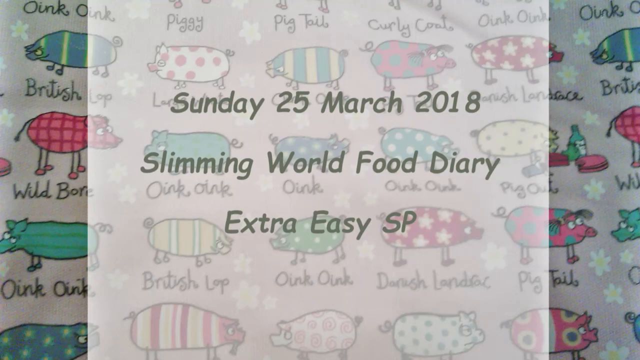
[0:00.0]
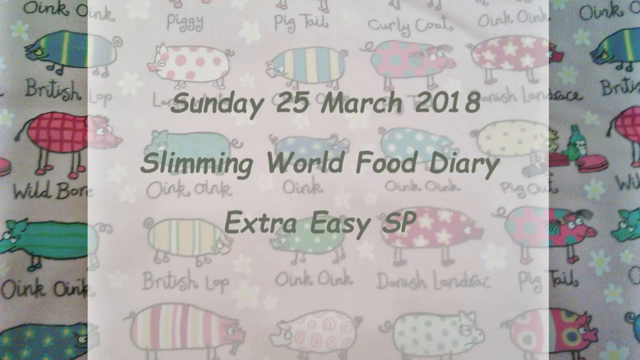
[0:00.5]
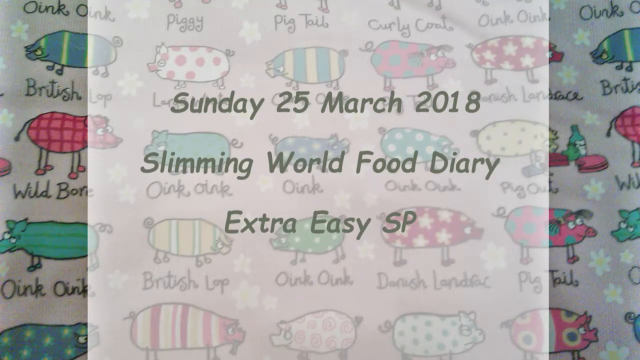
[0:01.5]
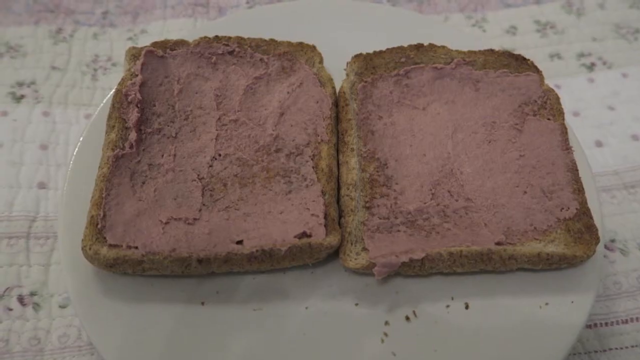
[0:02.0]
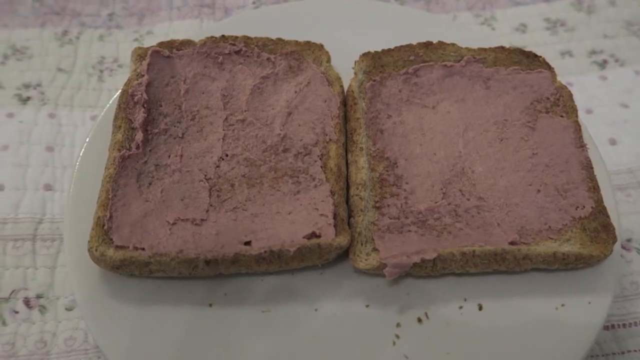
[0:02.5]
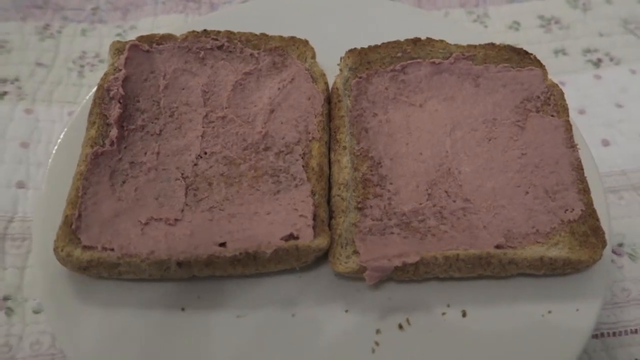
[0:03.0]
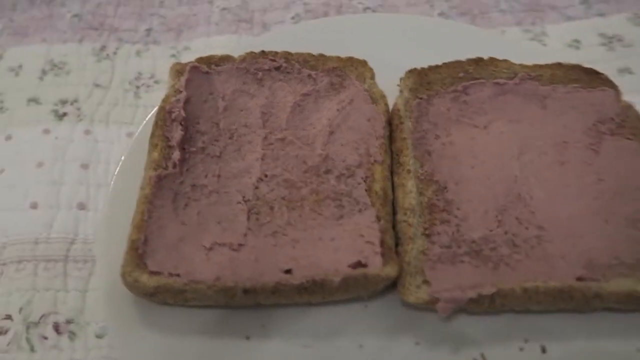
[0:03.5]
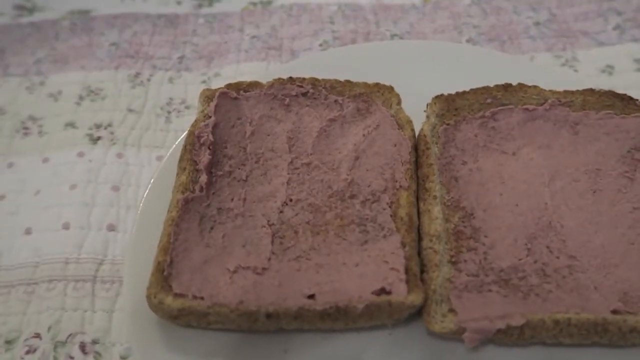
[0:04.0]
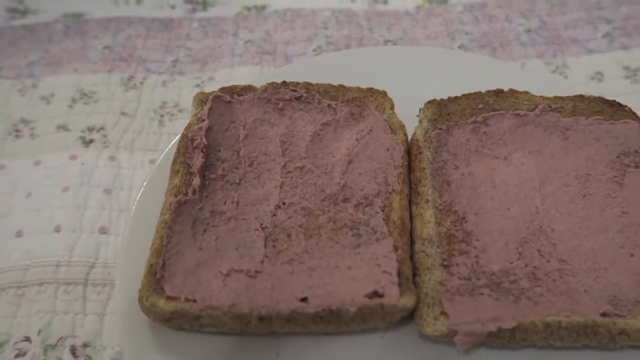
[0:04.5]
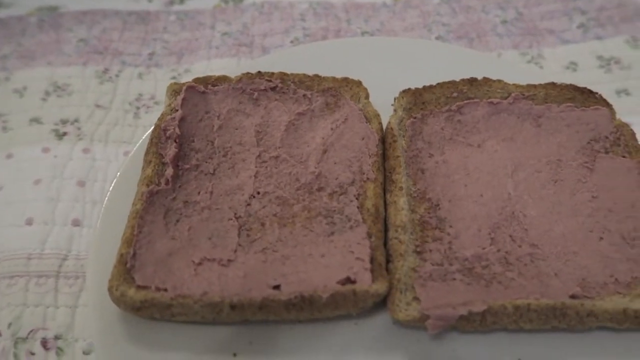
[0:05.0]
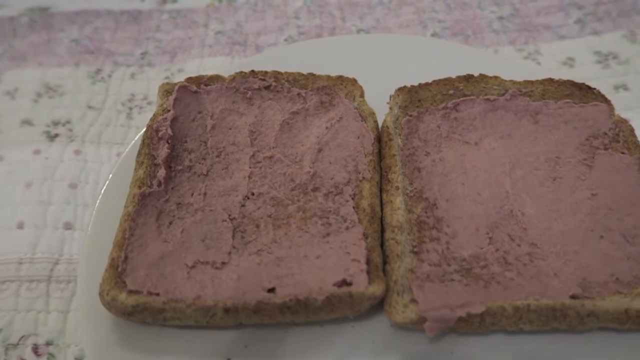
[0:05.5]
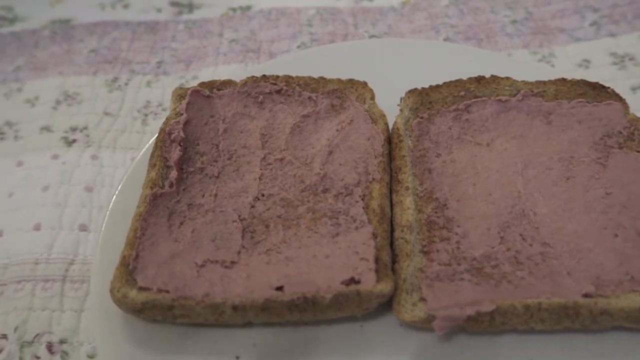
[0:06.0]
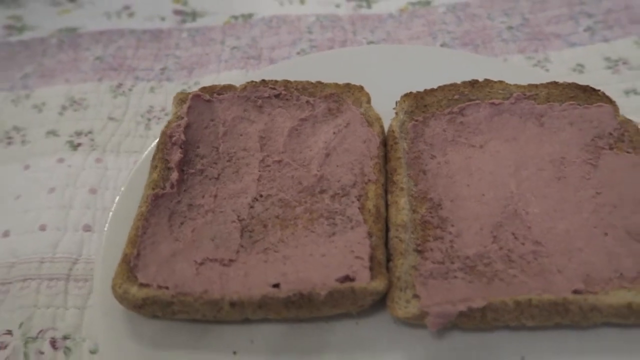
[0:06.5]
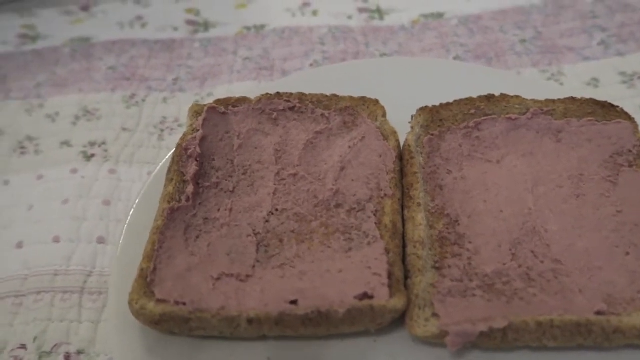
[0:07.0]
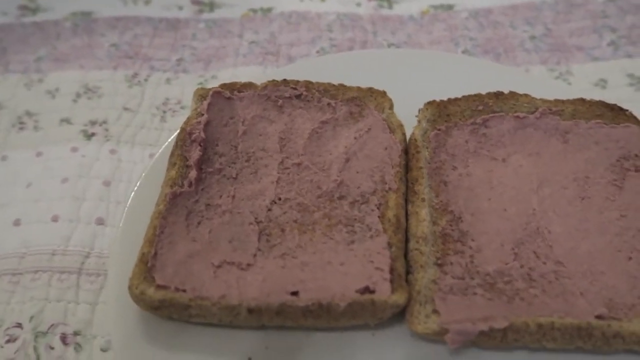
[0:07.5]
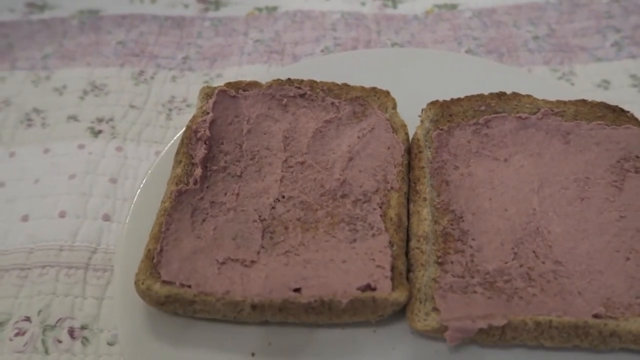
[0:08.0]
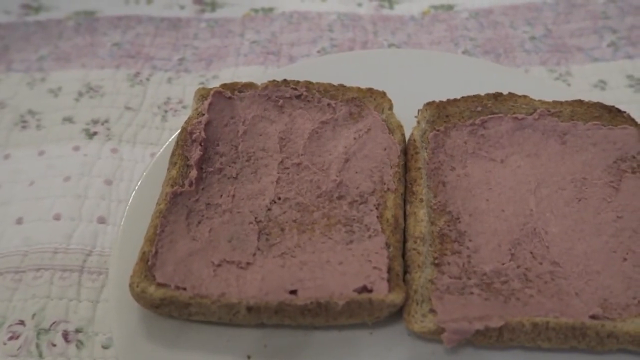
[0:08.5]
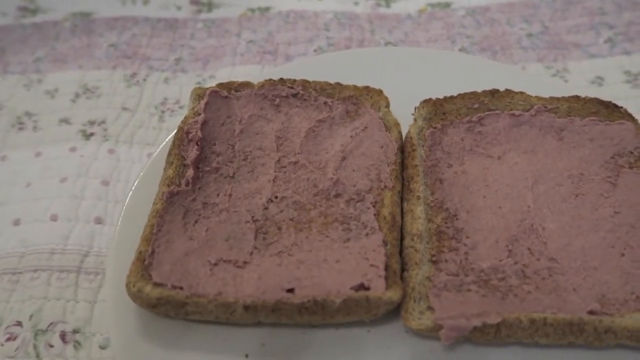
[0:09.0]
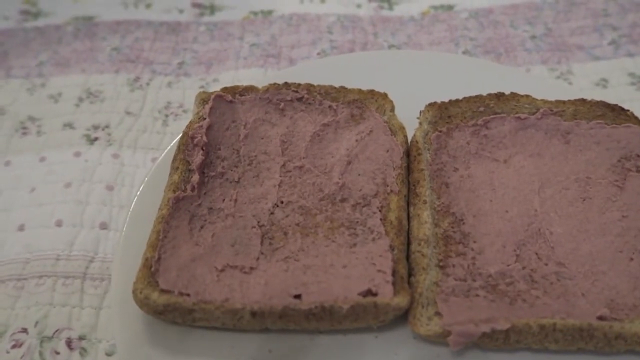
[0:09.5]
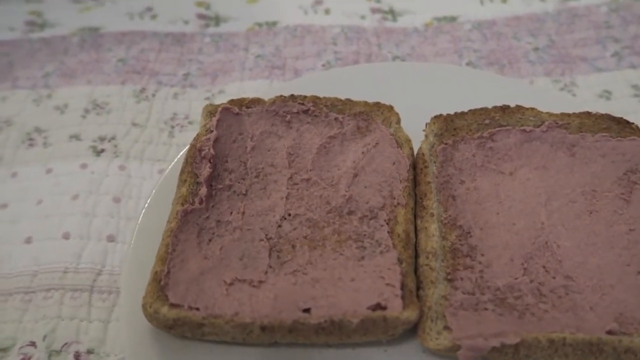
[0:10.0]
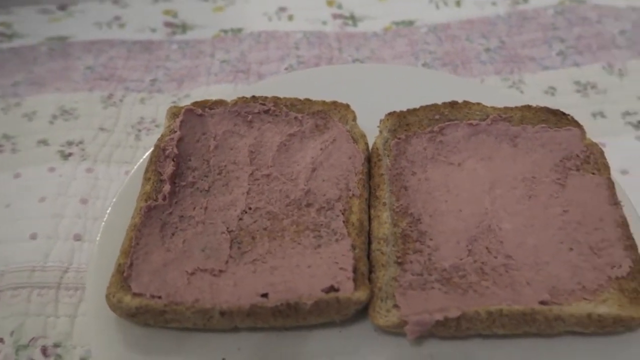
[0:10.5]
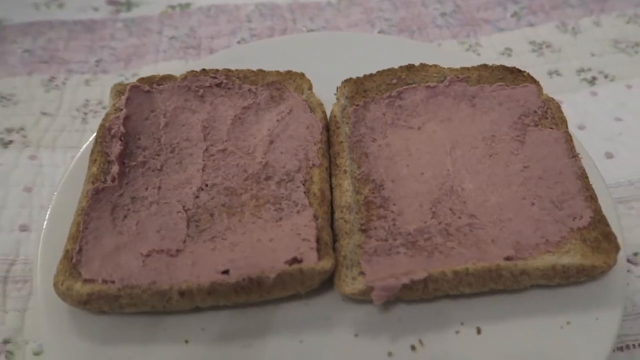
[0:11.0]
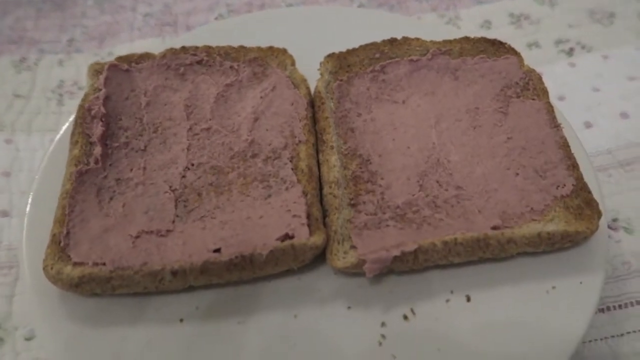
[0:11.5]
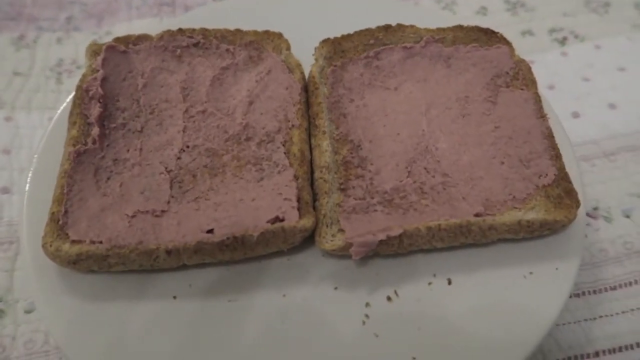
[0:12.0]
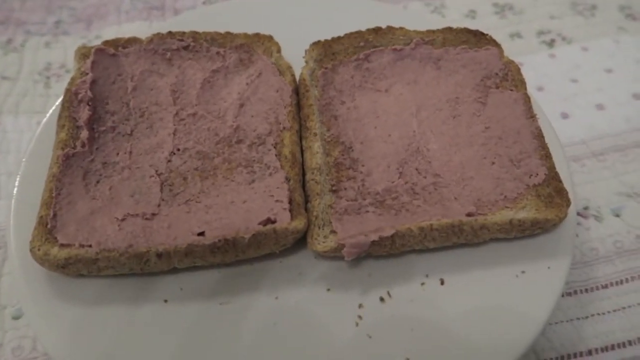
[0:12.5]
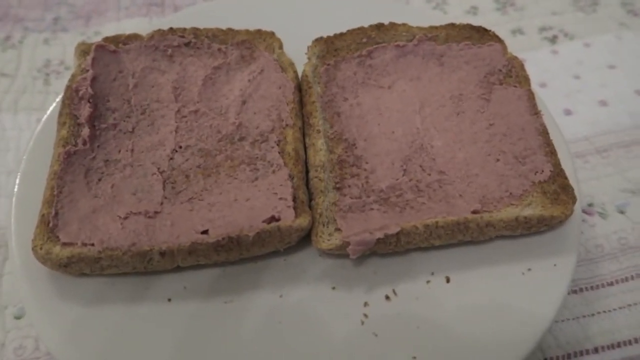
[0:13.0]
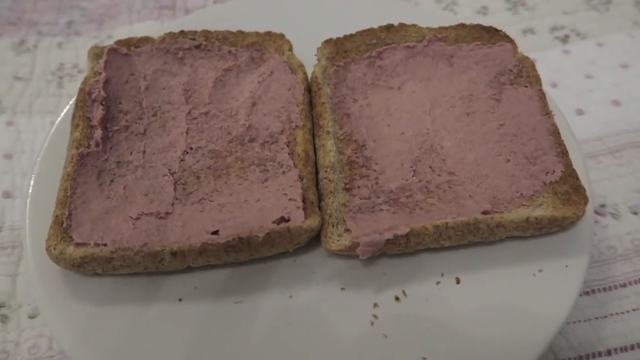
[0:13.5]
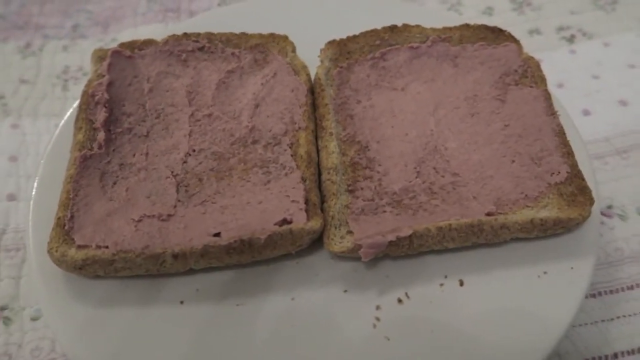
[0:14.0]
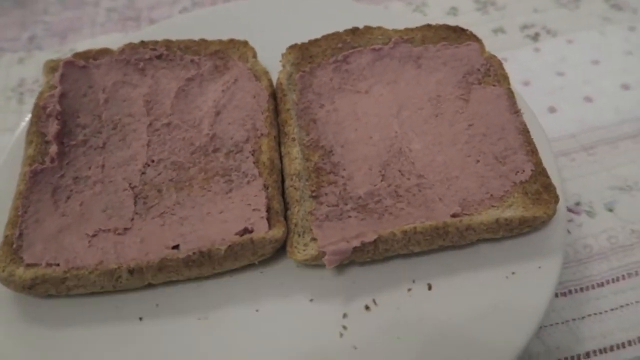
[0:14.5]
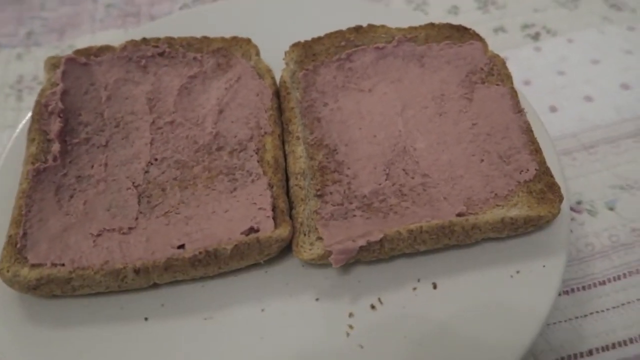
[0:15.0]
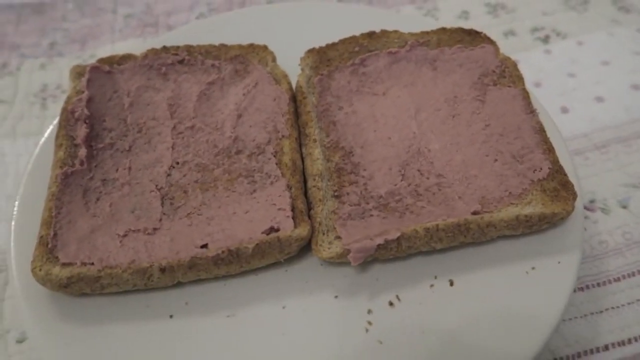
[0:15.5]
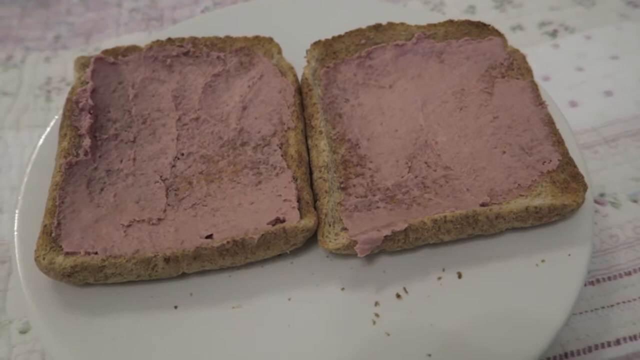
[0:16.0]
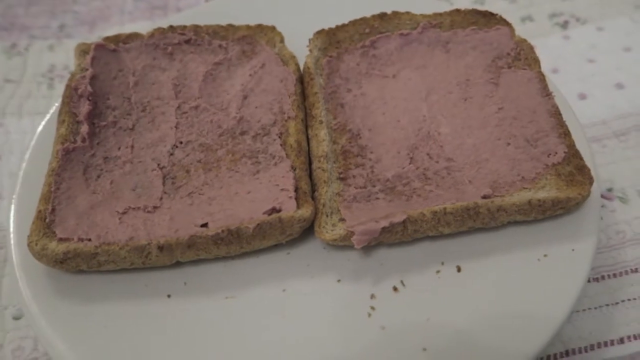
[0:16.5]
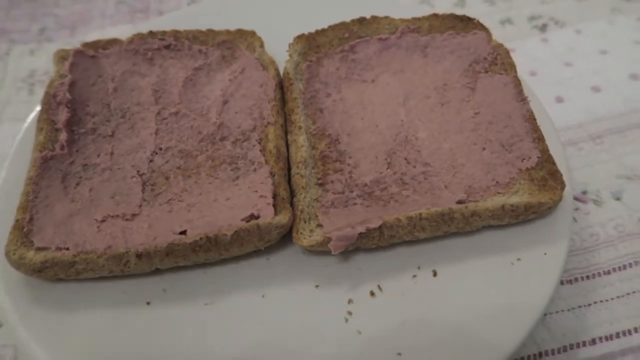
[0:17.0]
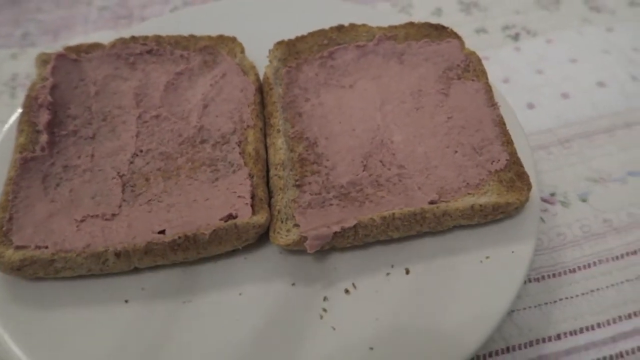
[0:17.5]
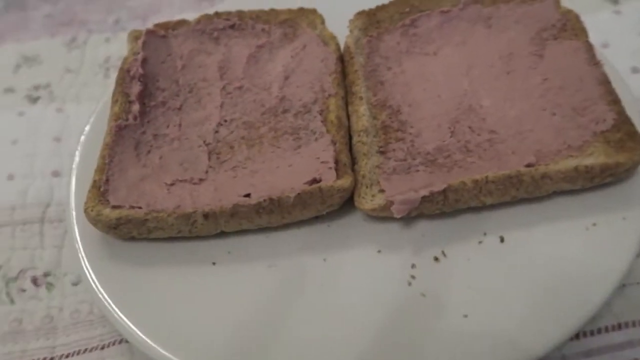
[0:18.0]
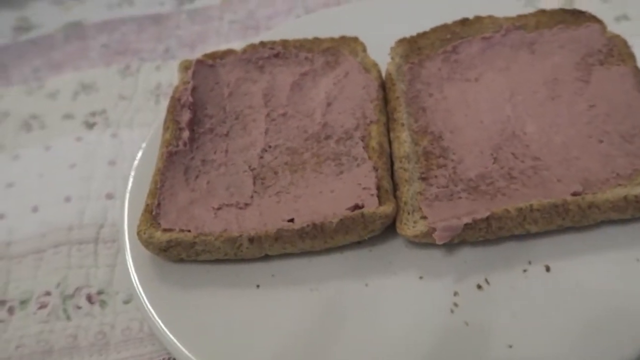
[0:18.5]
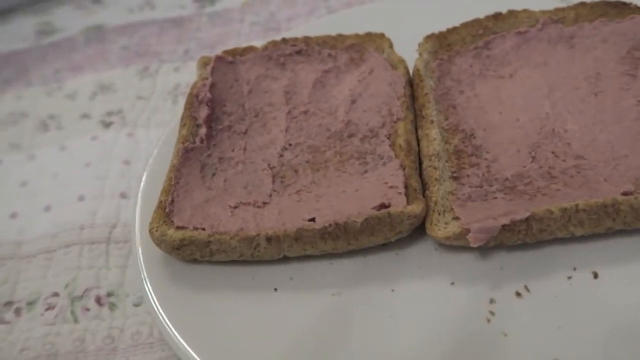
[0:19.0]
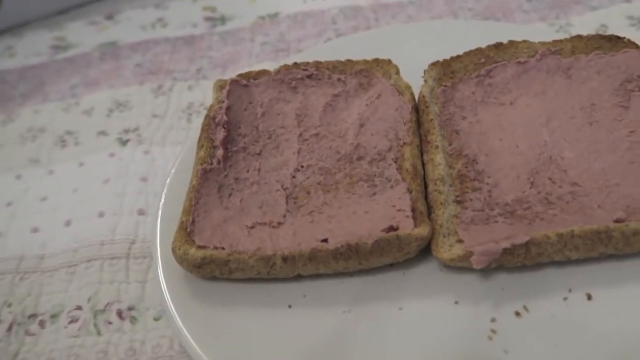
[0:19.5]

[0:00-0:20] Text appears at the beginning of the video reading "Sunday 25 March 2018 slimming world food diary extra easy." Next, two slices of toasted bread are on a plate, with a brownish spread spread over them, one on each slice. The camera keeps moving, showing the bread from all angles as the spread is on it.